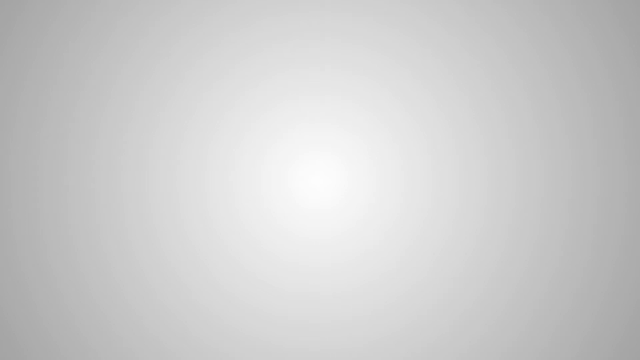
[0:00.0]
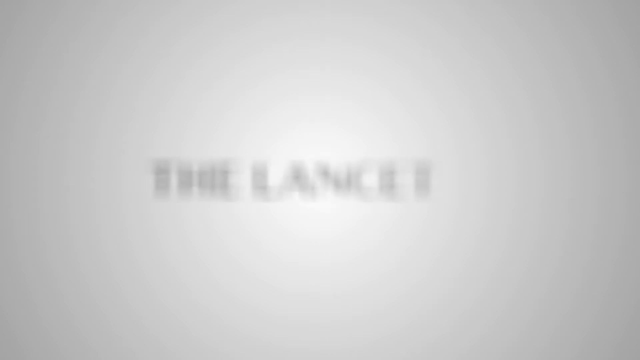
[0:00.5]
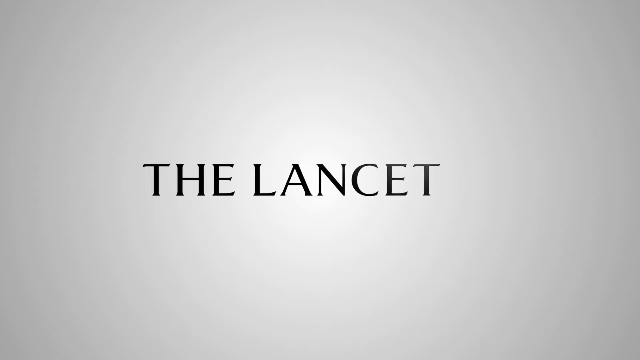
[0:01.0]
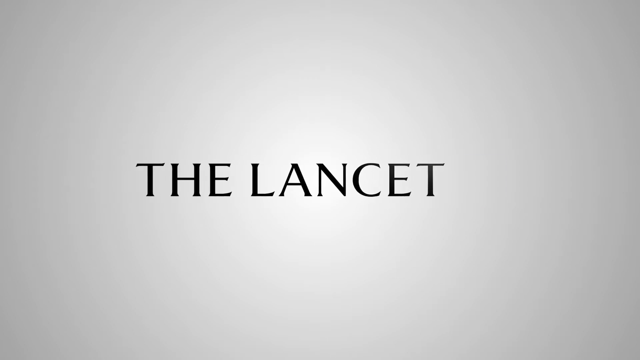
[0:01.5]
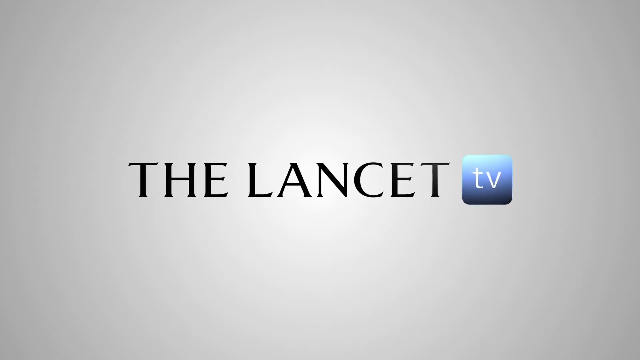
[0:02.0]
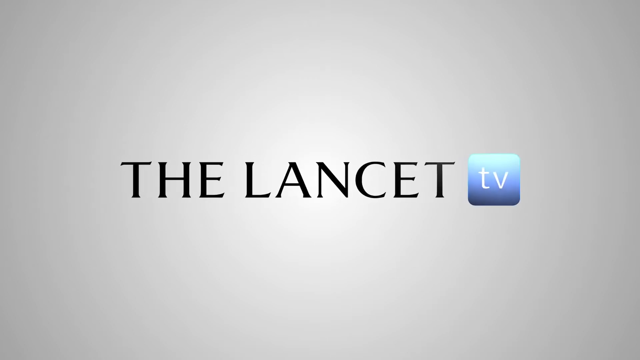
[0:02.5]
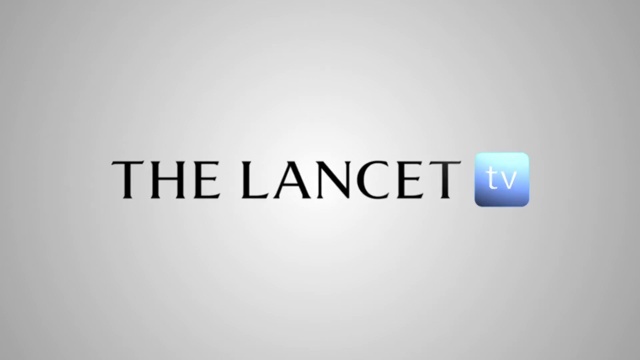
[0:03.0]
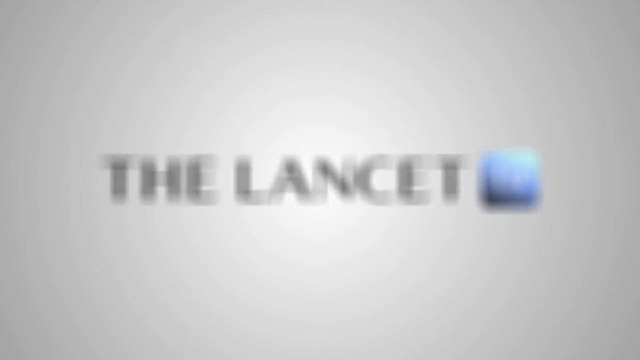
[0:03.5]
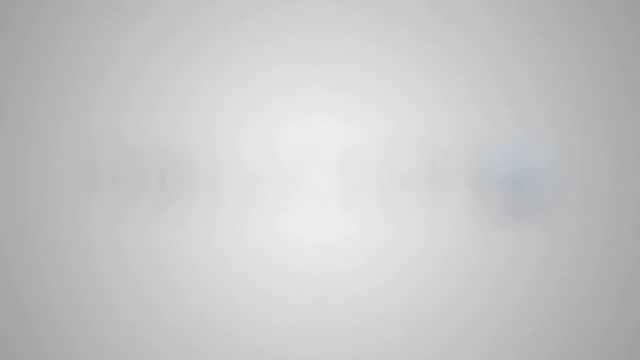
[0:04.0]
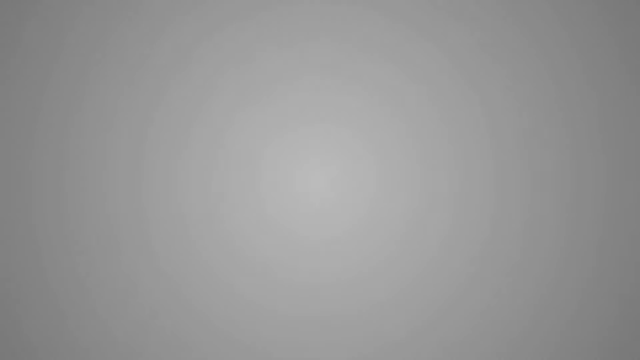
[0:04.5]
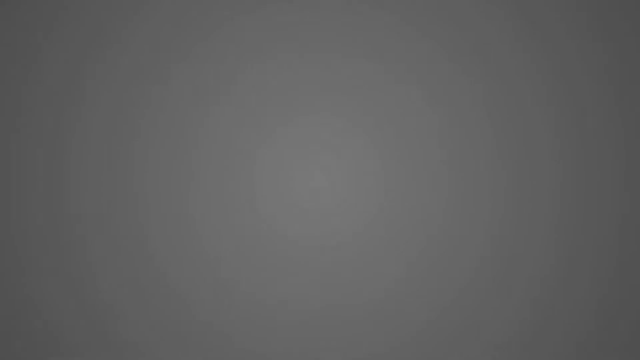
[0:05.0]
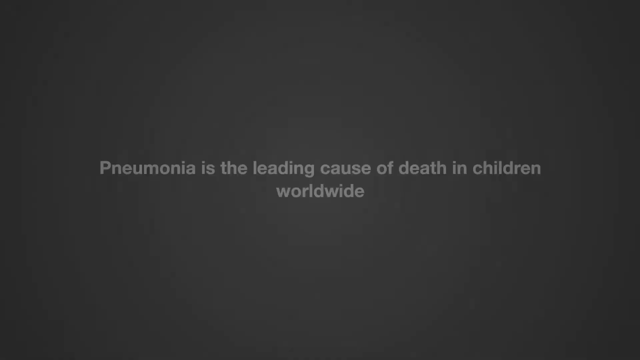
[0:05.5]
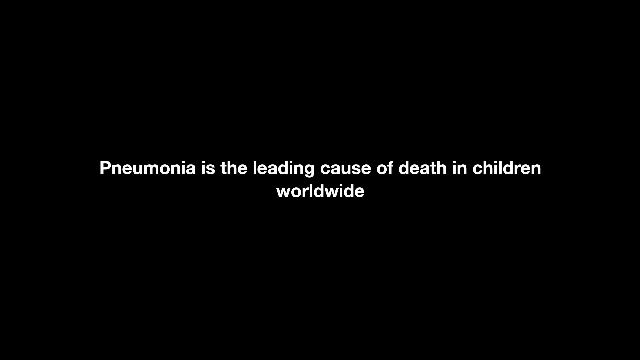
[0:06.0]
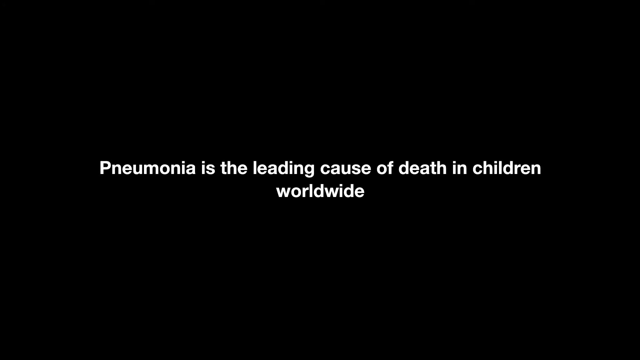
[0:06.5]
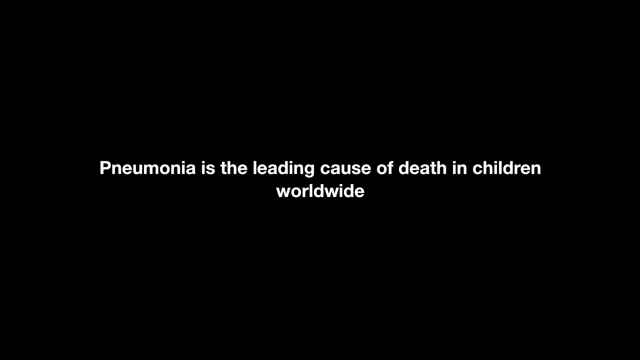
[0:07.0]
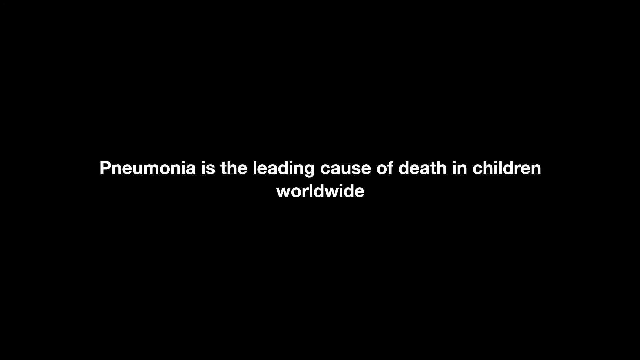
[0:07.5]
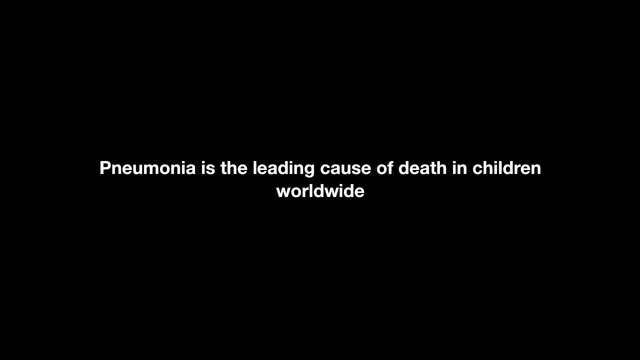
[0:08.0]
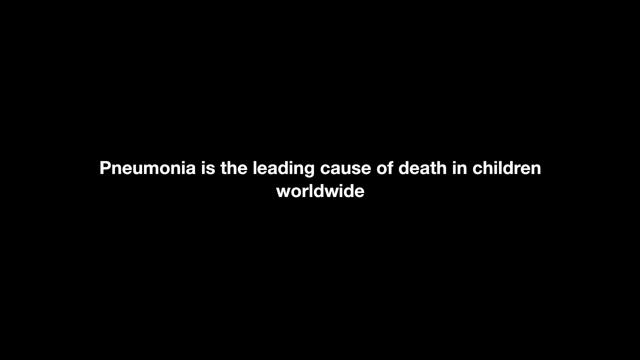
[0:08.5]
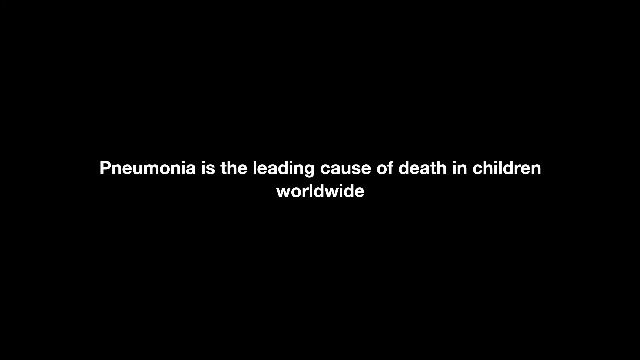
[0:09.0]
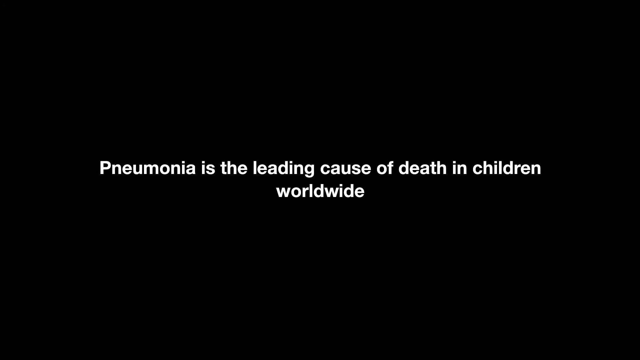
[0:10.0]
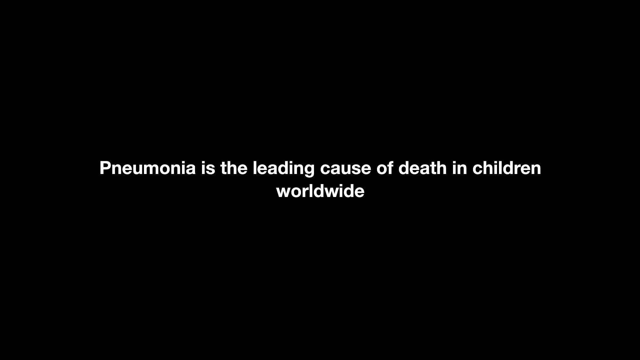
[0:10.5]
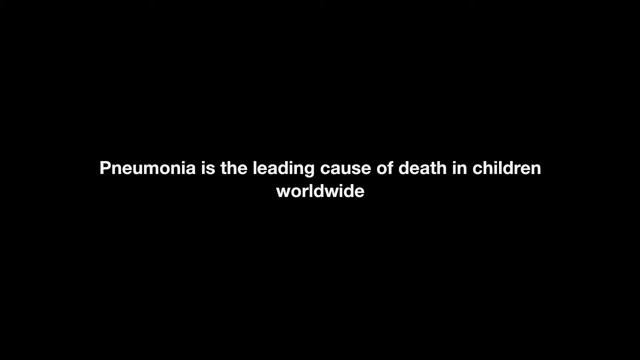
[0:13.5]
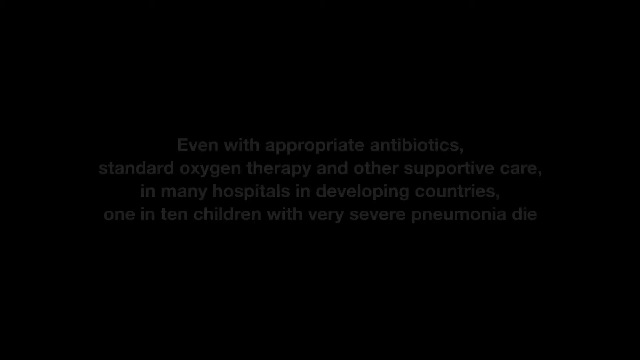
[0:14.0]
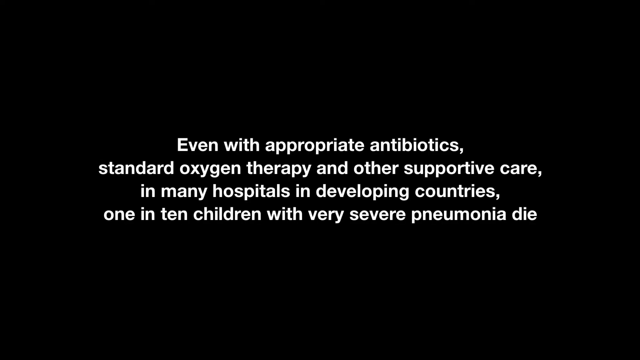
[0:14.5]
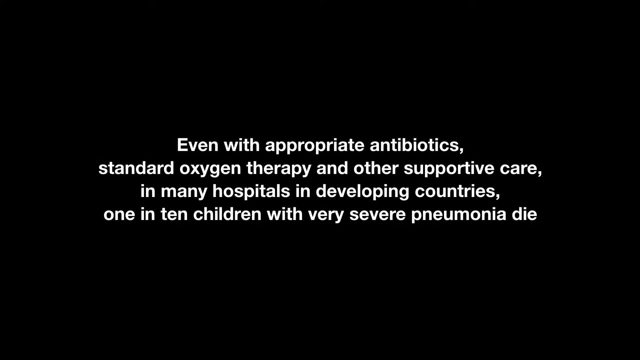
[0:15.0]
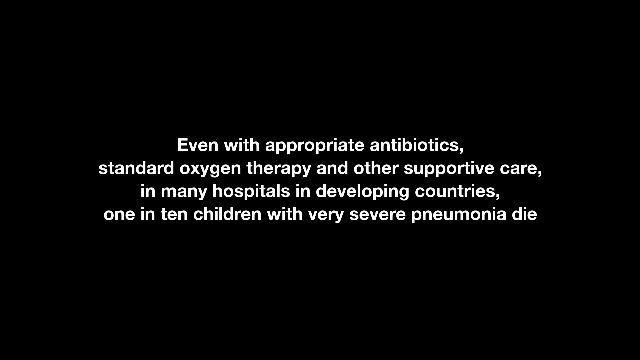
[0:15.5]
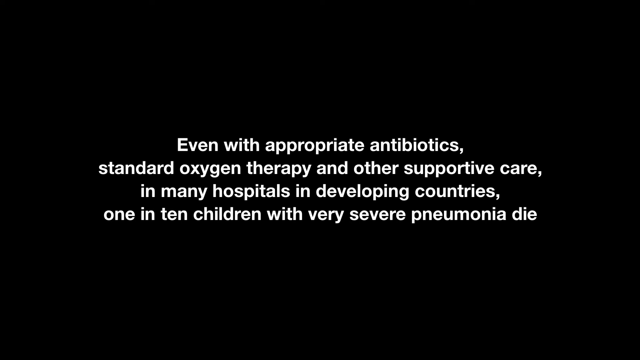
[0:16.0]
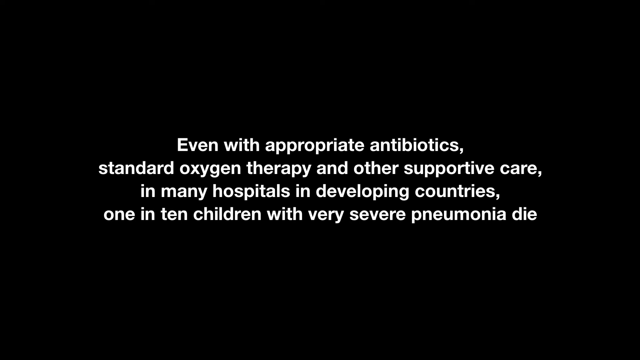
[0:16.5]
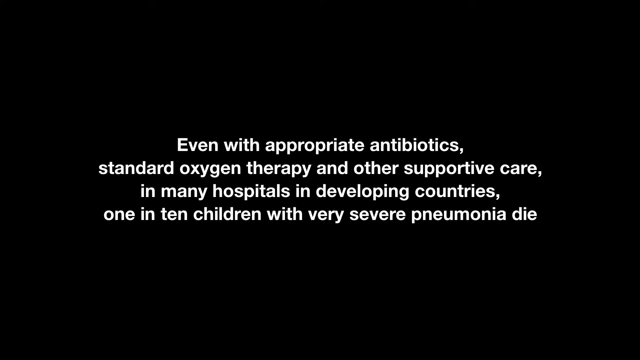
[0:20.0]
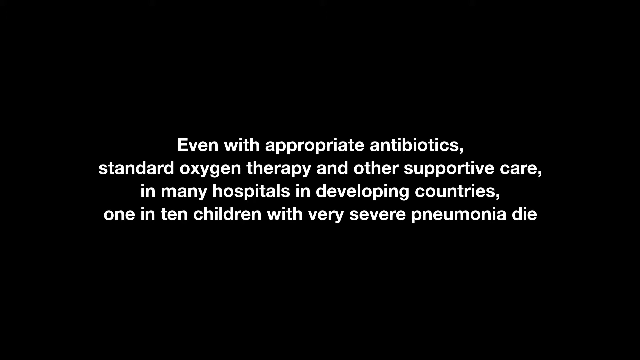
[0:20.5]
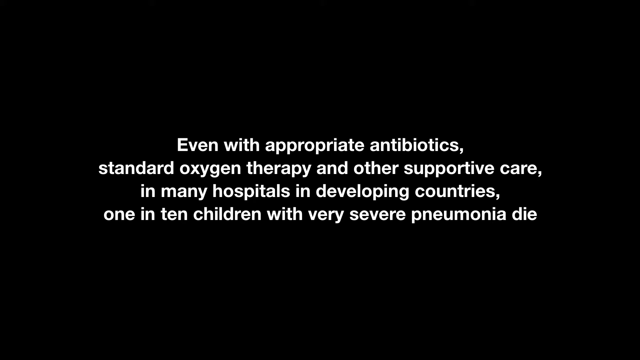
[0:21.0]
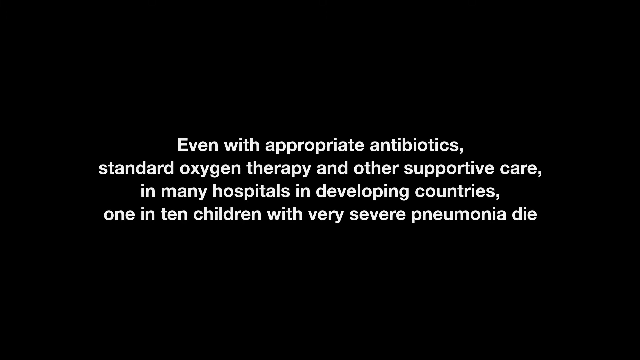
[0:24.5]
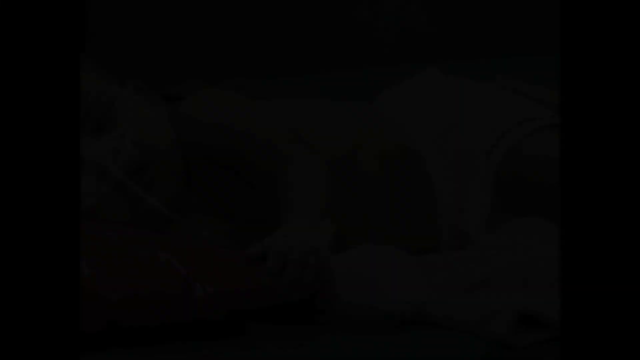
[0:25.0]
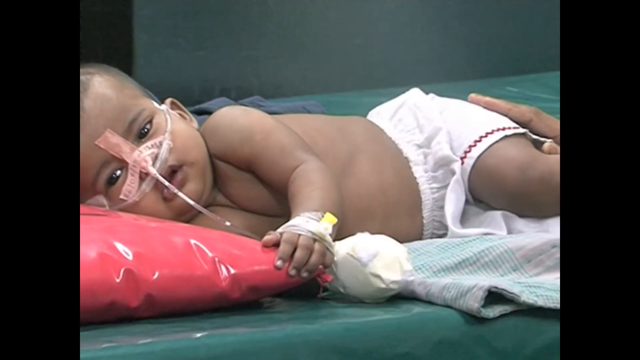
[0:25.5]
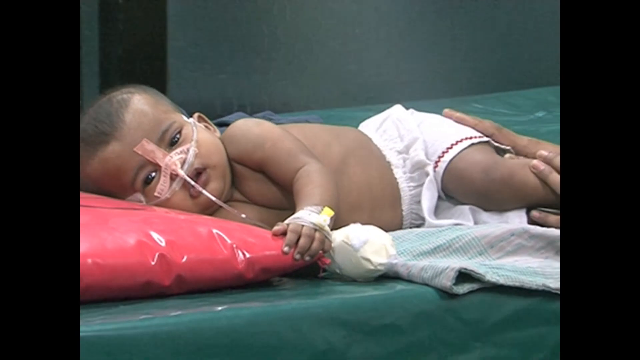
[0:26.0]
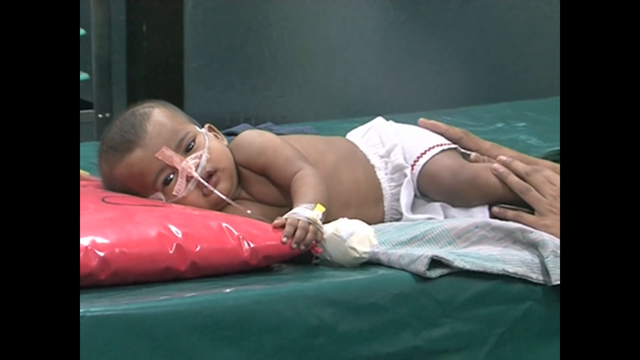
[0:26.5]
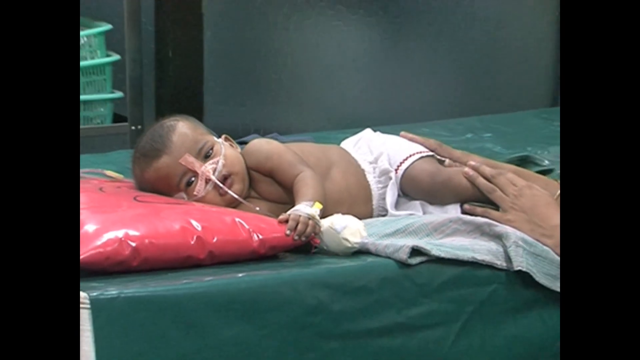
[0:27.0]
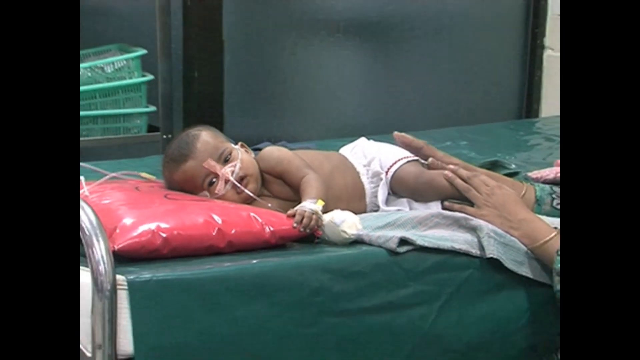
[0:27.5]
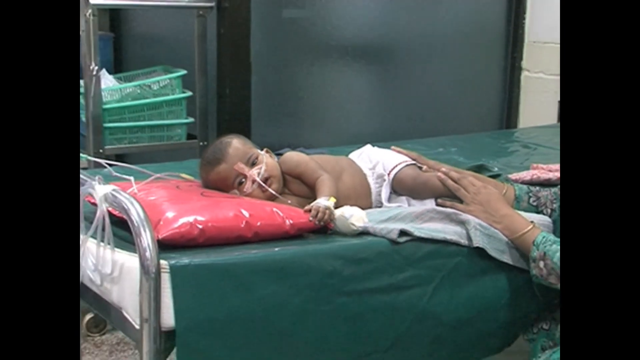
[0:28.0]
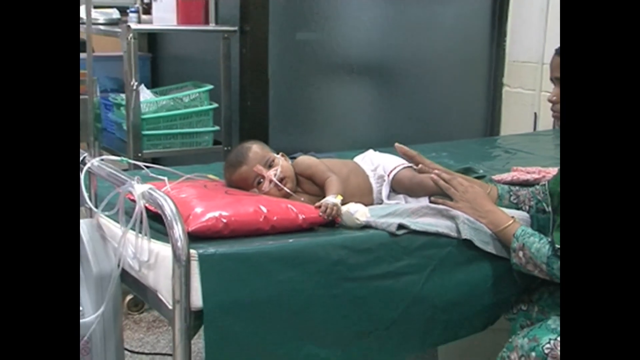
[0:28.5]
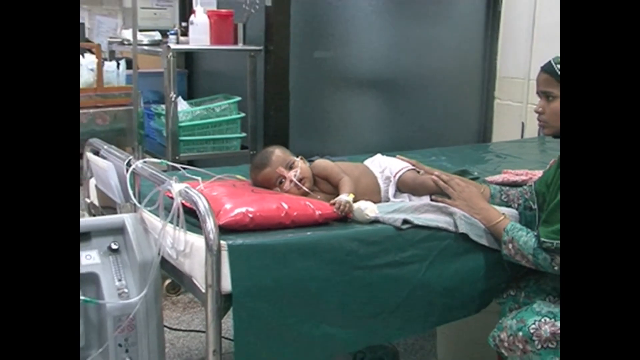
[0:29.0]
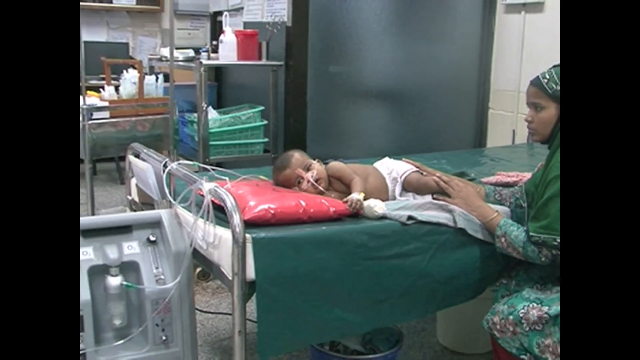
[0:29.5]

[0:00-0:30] The video opens on a grey blank screen, then black text reading "The Lancet" appears in the centre, with a TV logo on the right-hand side: a blue square that says "TV" in white. The screen fades to black and white text reads "Pneumonia is the leading cause of death in children worldwide." Nothing else is on the screen apart from this white text on the black background. The text fades out and new white text fades in: "even with appropriate antibiotics, standard oxygen therapy and other supportive care in many hospitals in developing countries 1 in 10 children with very severe pneumonia die." Footage then appears of a young baby lying on a green bed with a red cushion, wearing only shorts, with various medical things strapped to his face. The shot zooms out to show an adult tapping the baby to comfort it, and as it zooms out more hospital beds become visible in a hospital room.